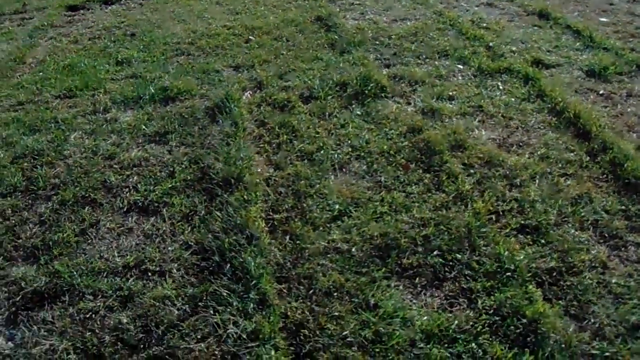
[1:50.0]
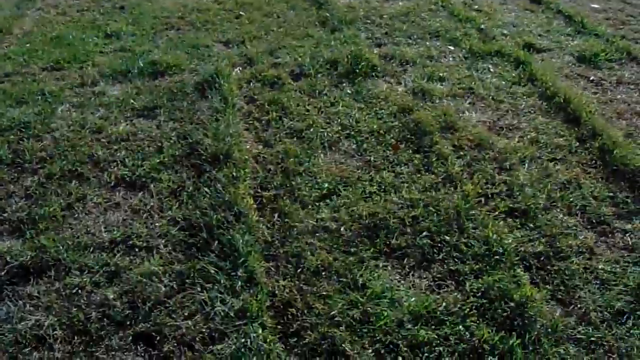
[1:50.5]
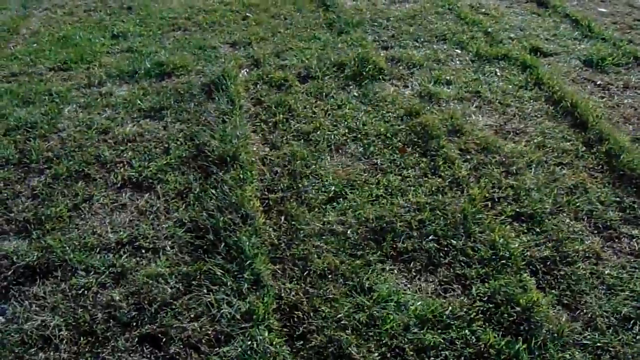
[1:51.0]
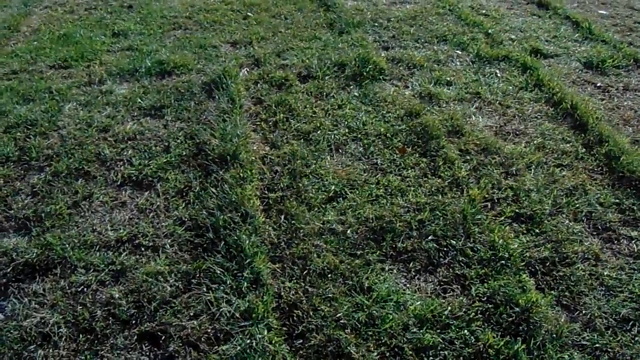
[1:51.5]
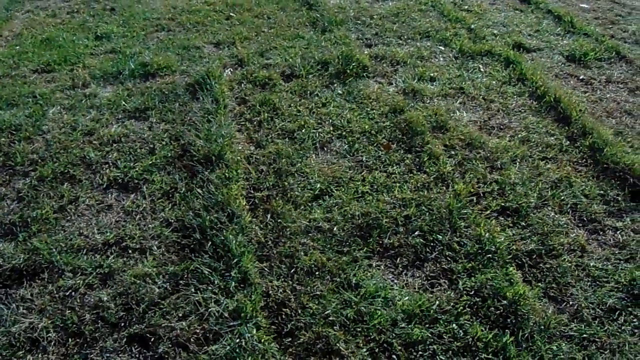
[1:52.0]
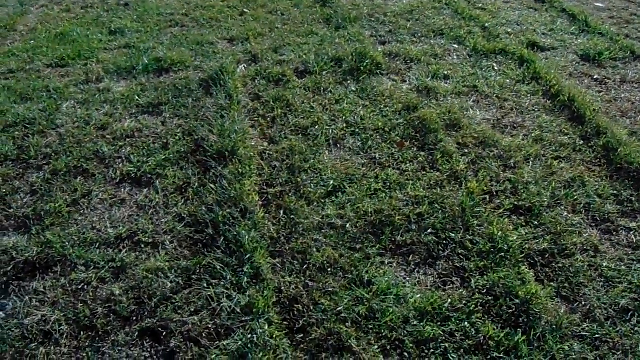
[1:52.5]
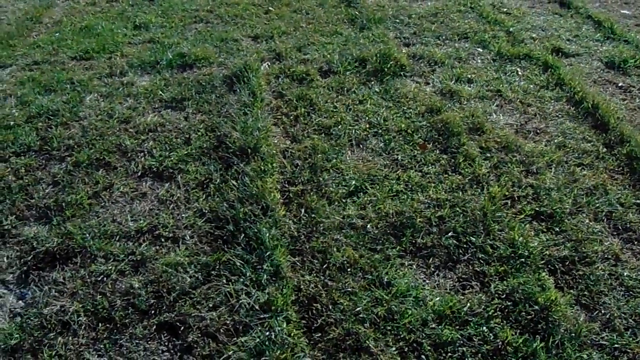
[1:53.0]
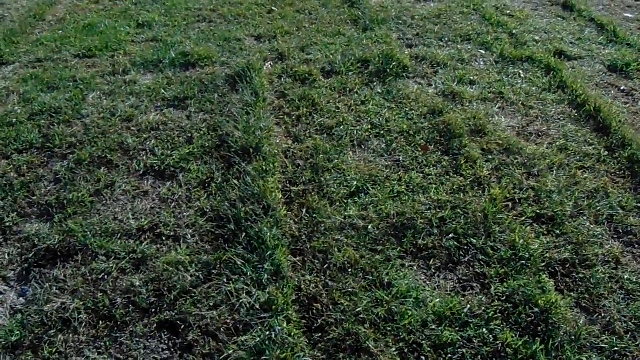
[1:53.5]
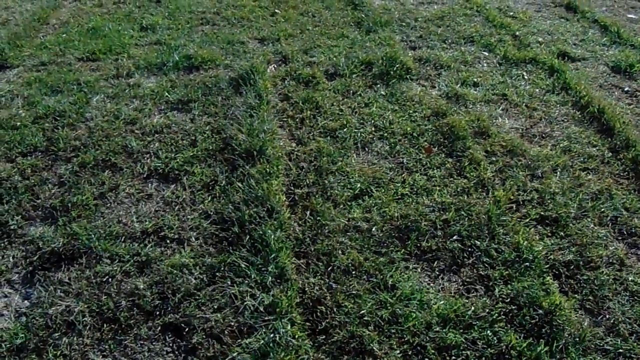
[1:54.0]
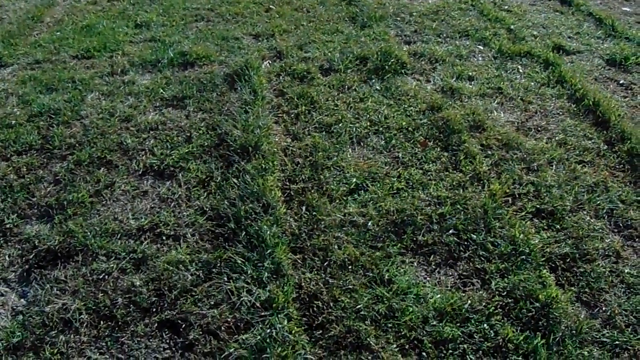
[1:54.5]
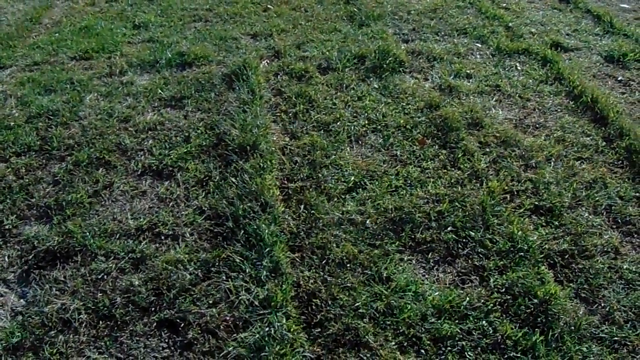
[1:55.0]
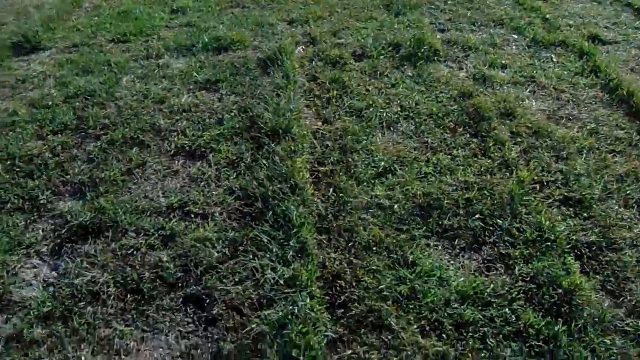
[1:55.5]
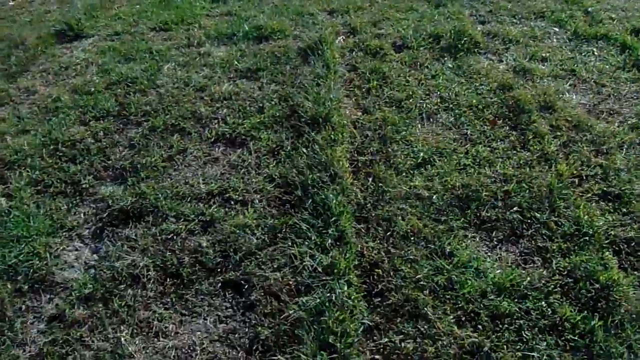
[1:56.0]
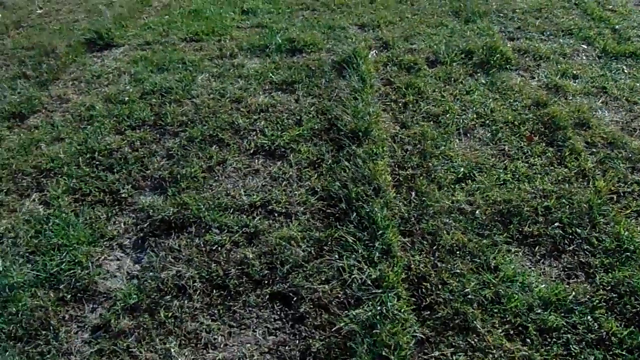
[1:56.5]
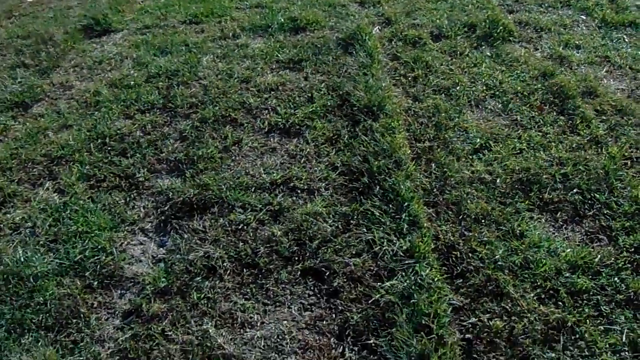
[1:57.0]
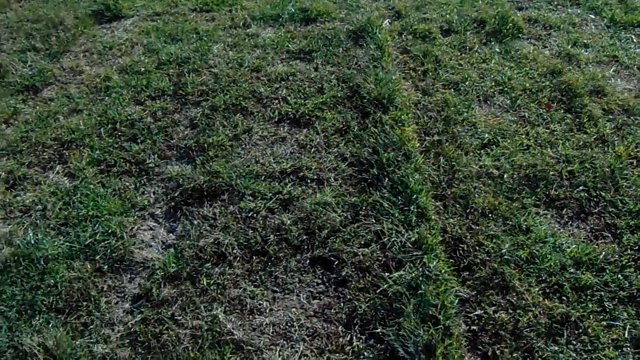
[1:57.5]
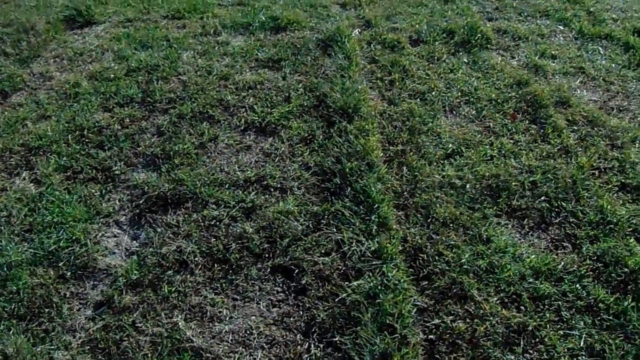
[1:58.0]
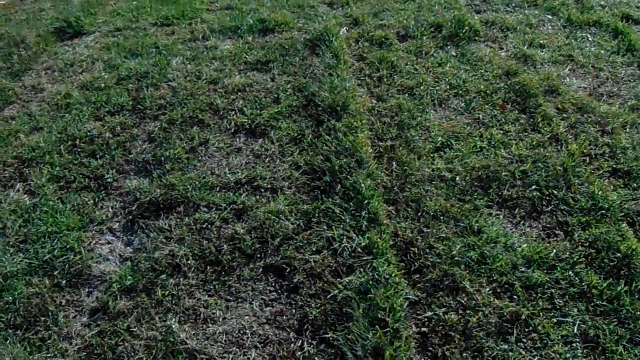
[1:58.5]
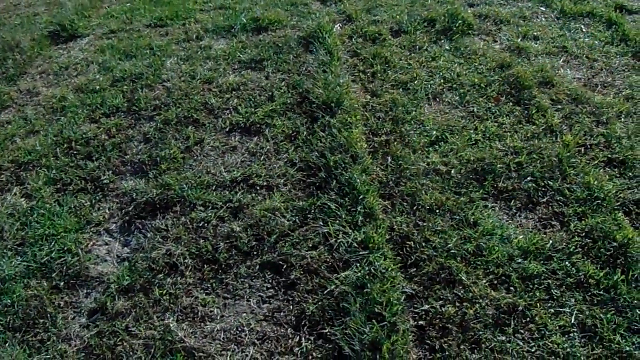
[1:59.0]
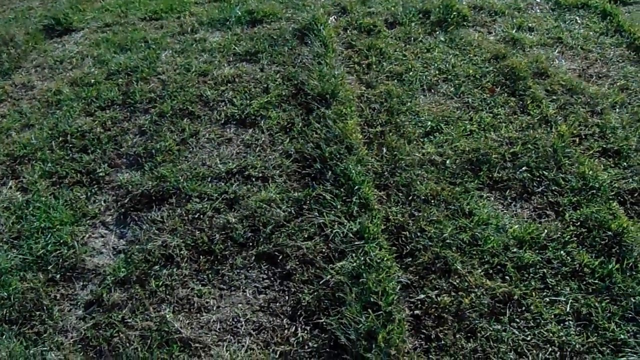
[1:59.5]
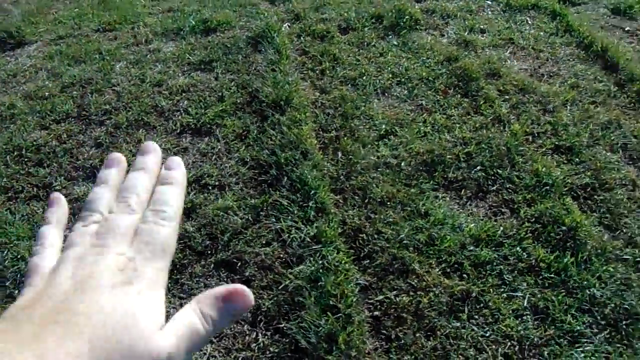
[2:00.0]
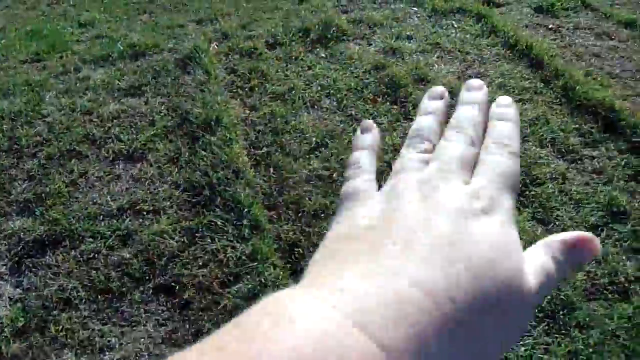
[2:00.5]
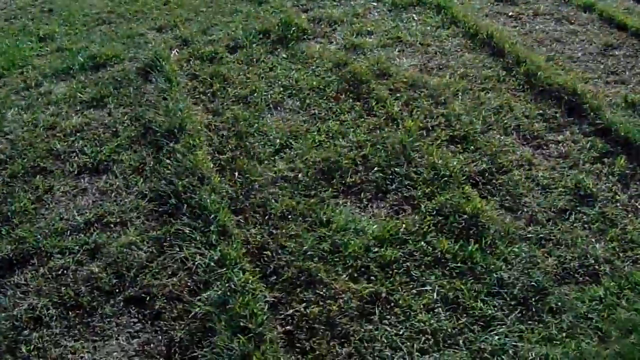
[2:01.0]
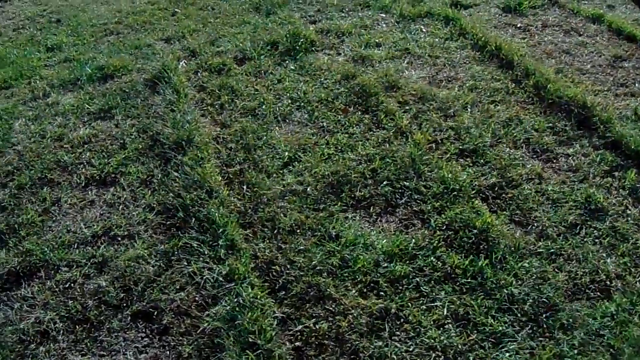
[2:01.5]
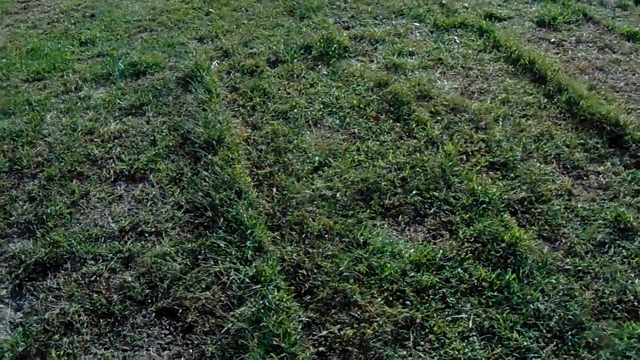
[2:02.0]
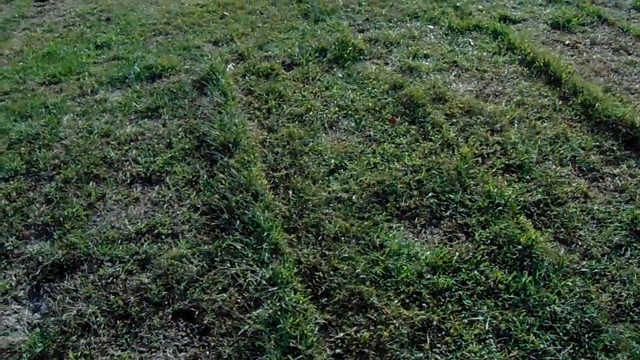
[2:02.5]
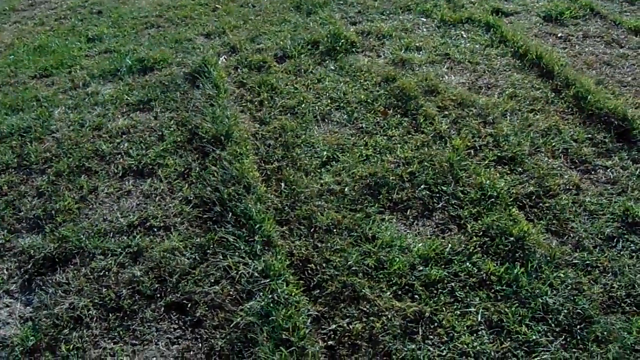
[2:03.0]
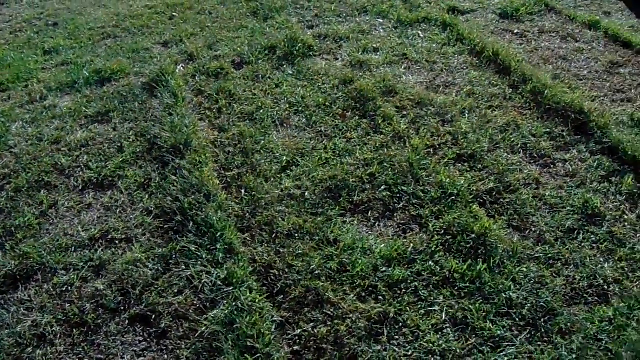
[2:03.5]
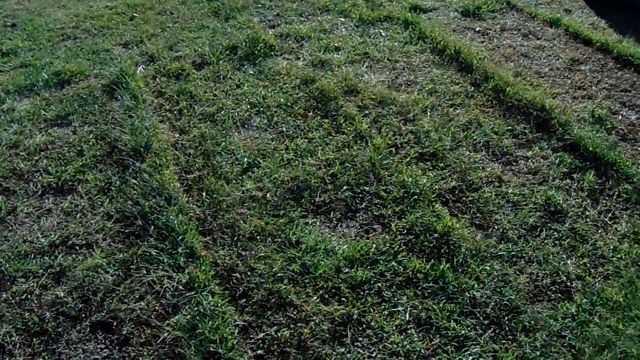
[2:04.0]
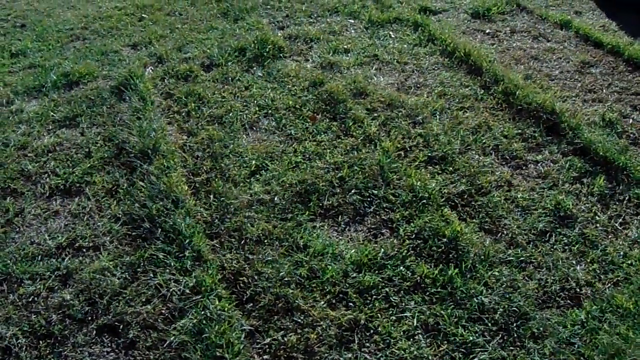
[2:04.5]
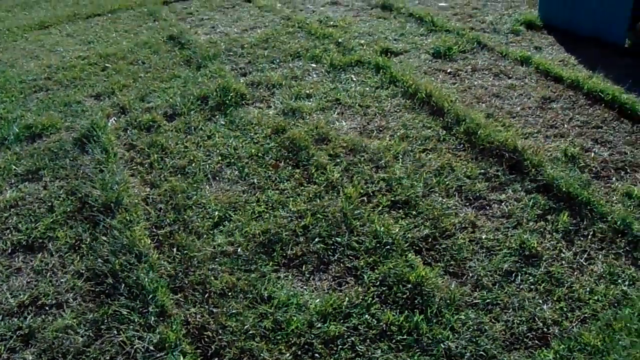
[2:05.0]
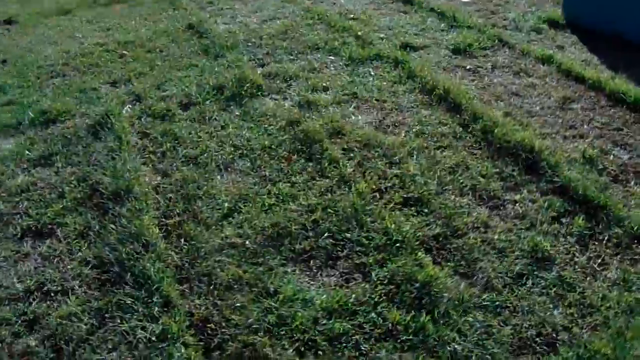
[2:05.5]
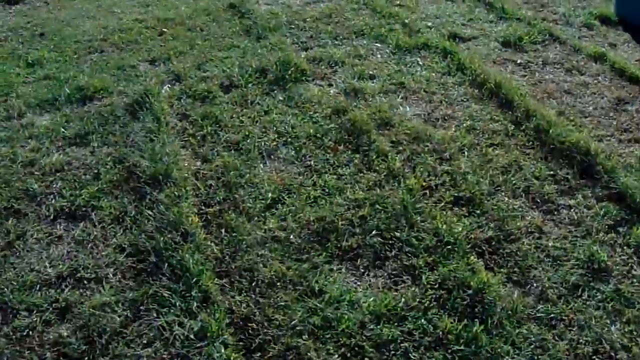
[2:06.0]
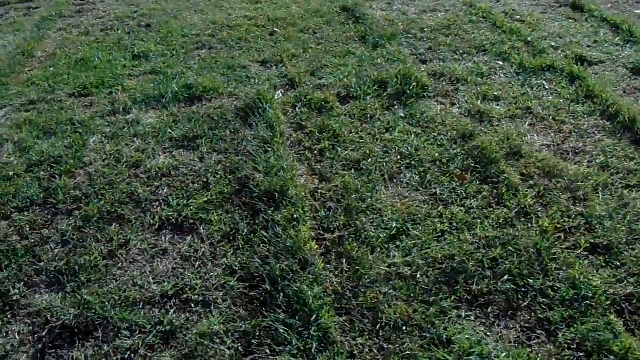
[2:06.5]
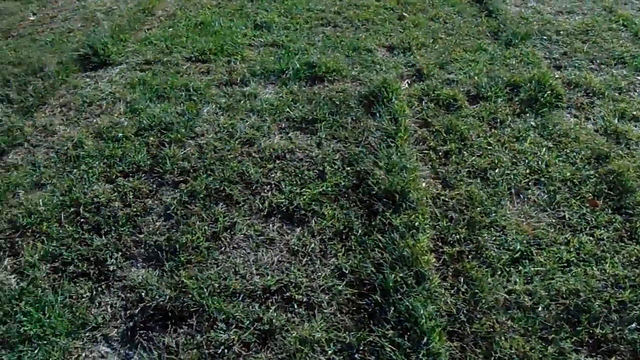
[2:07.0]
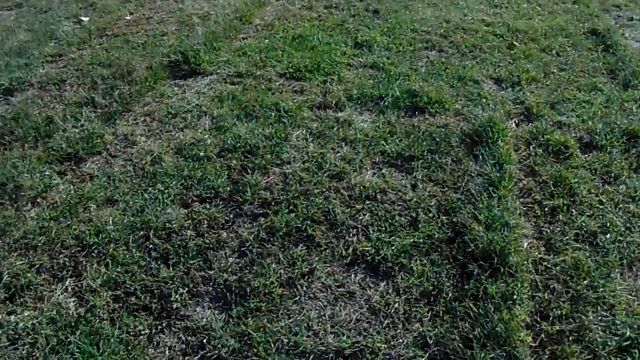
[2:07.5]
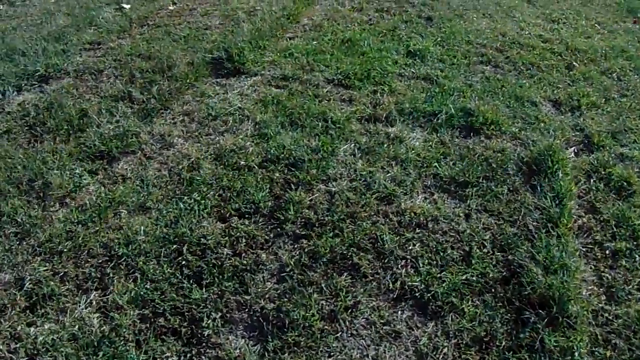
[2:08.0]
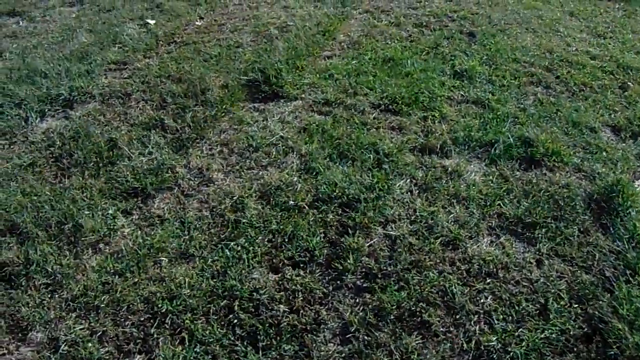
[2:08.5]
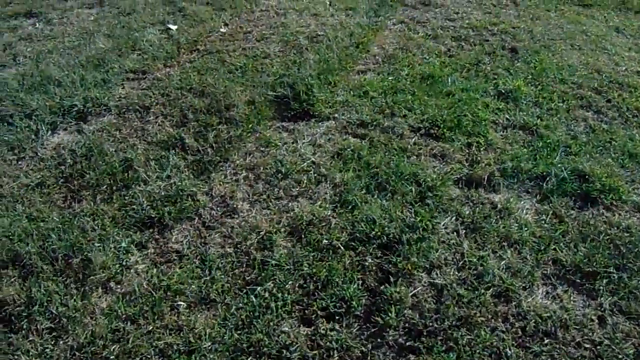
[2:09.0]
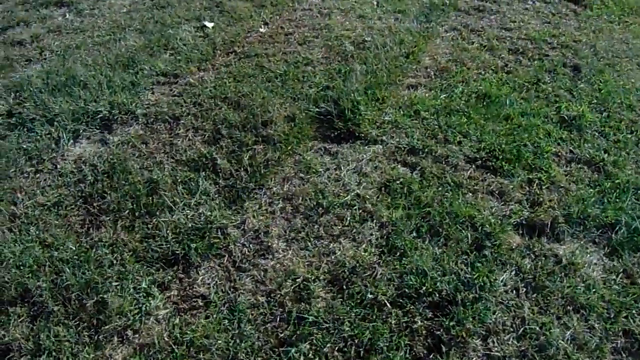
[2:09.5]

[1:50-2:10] The shot shows a piece of land with strands of grass placed in a disordered way; in some spots the grass draws more or less regular rectangular shapes. From the start, a man's hand appears in the frame, moving from left to right and occupying the lower portion of the frame. The hand is very light, almost white. Shortly before the end, a very dark blue structure is seen in the upper right corner, casting an equally dark shadow on the ground at the far right of the frame. In the last moments, the man, and therefore the camera, moves toward the upper left. The shots are not stable and the camera oscillates throughout.